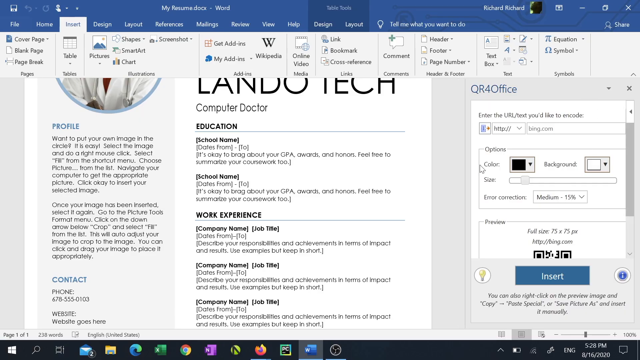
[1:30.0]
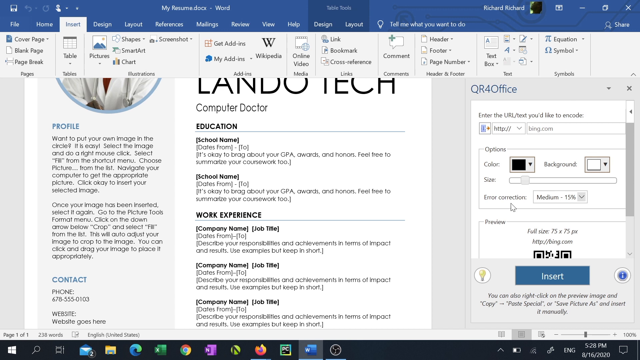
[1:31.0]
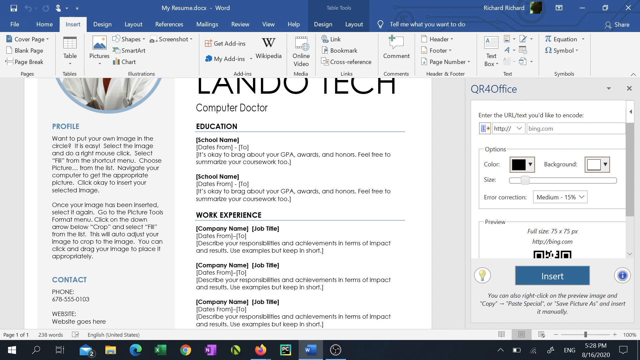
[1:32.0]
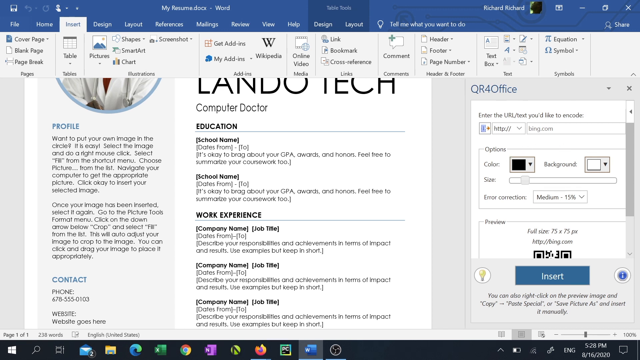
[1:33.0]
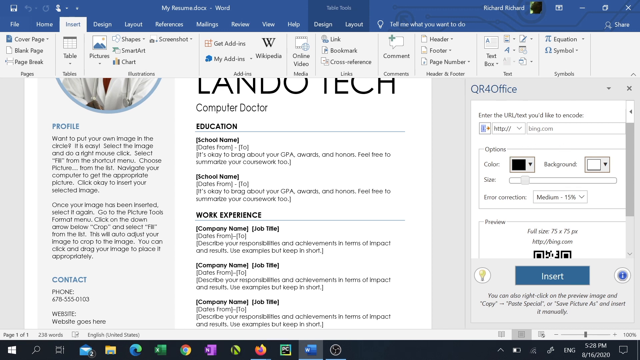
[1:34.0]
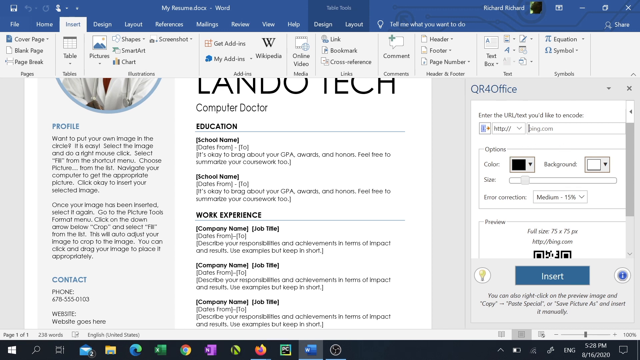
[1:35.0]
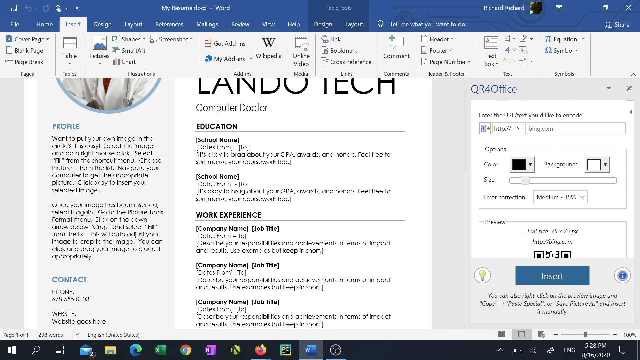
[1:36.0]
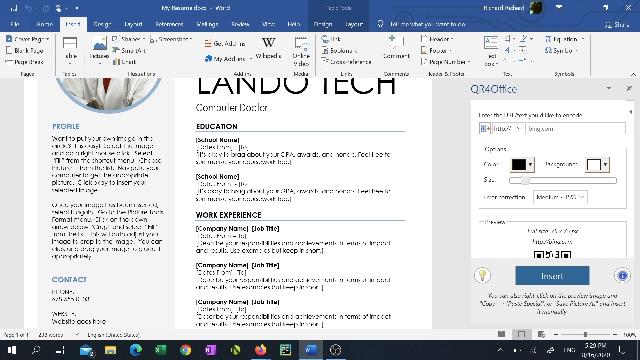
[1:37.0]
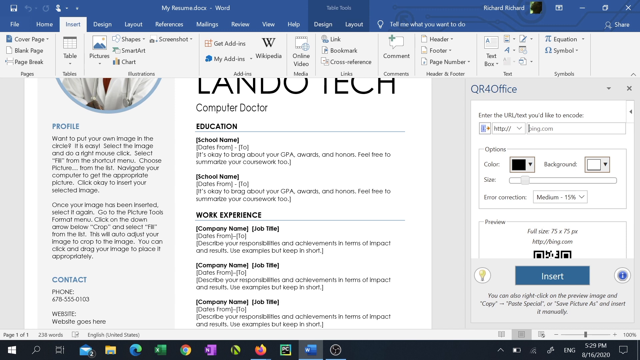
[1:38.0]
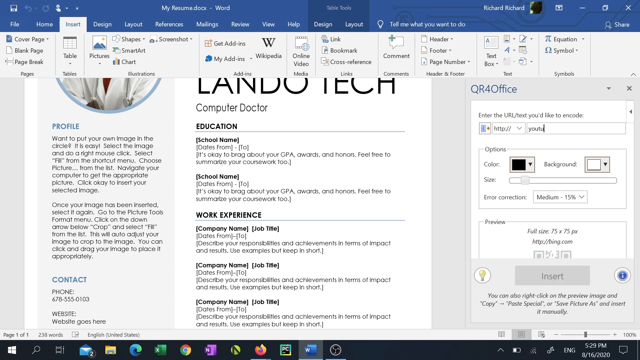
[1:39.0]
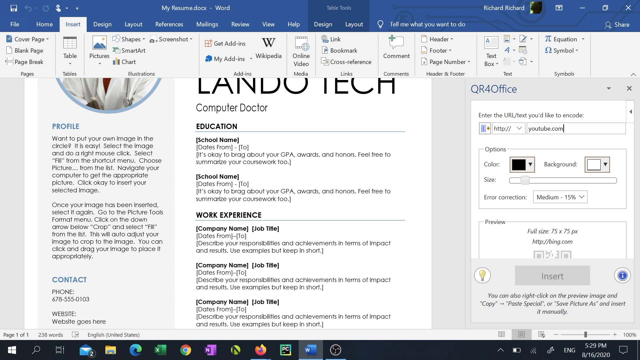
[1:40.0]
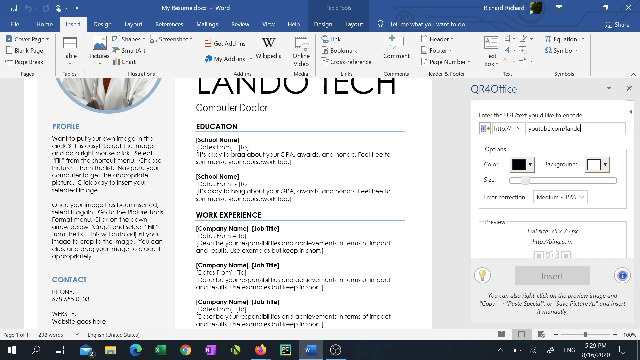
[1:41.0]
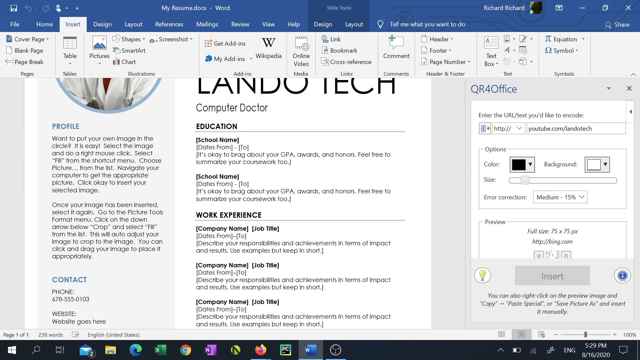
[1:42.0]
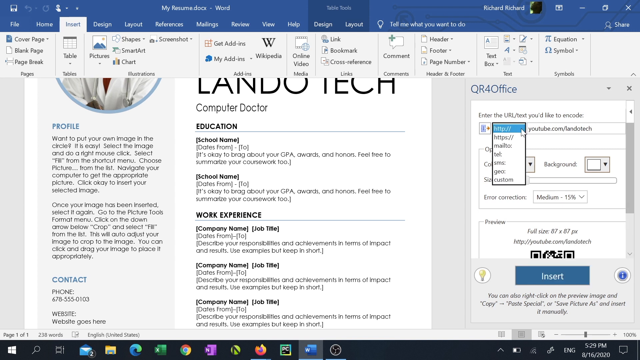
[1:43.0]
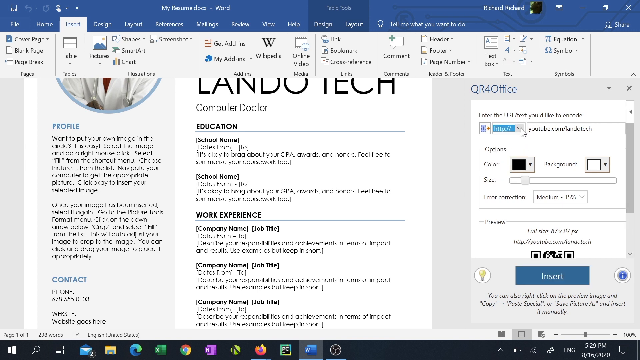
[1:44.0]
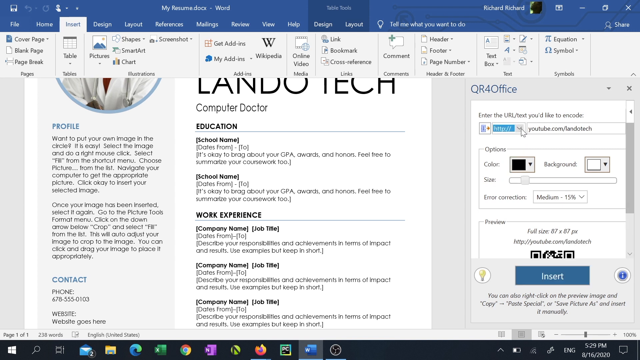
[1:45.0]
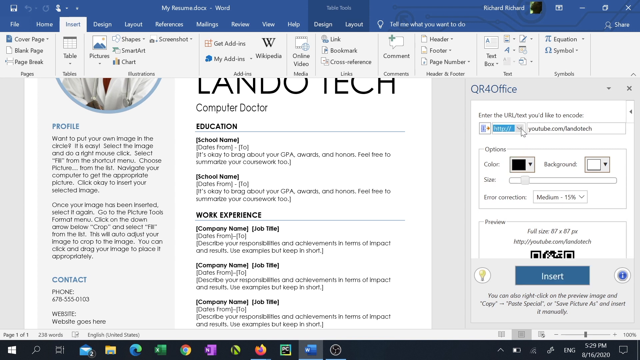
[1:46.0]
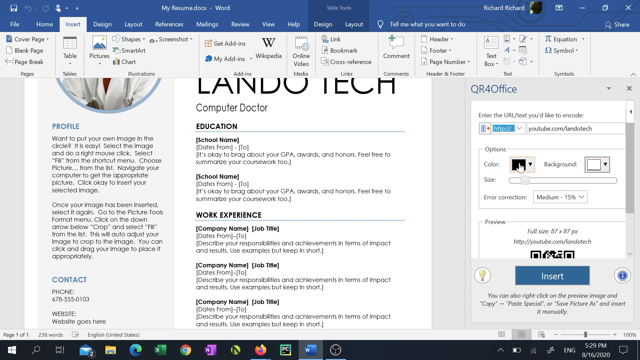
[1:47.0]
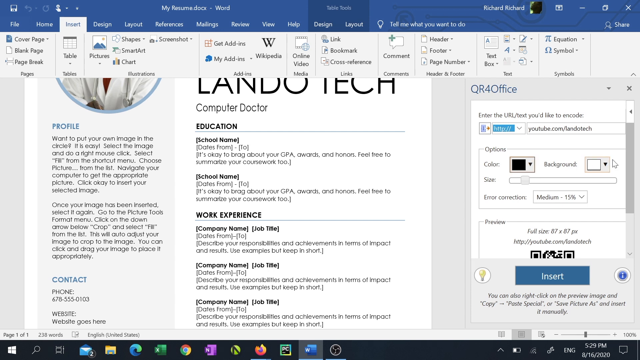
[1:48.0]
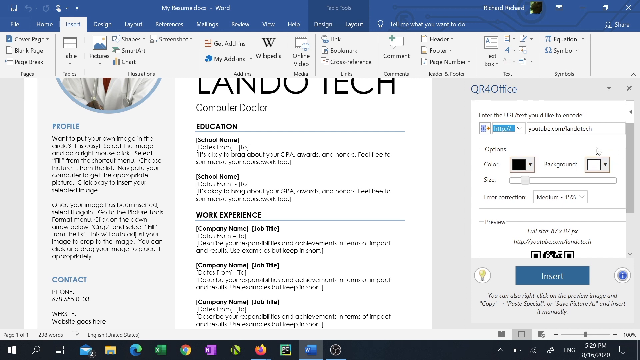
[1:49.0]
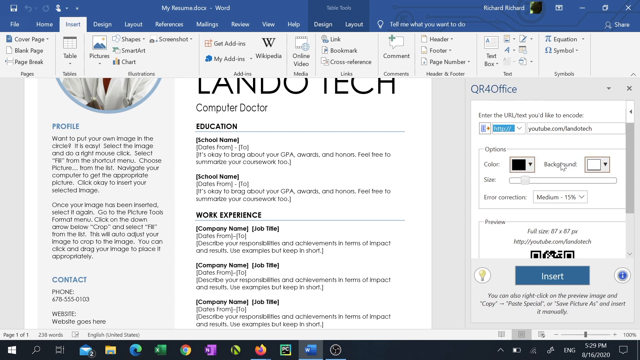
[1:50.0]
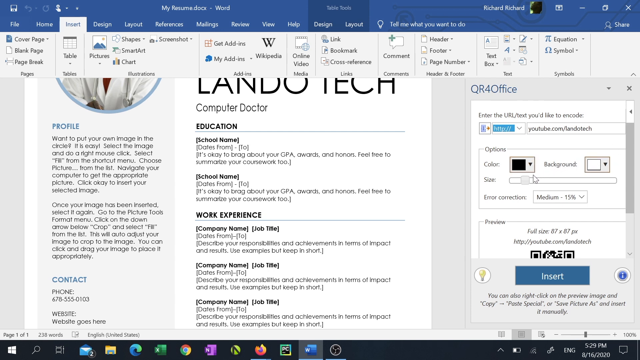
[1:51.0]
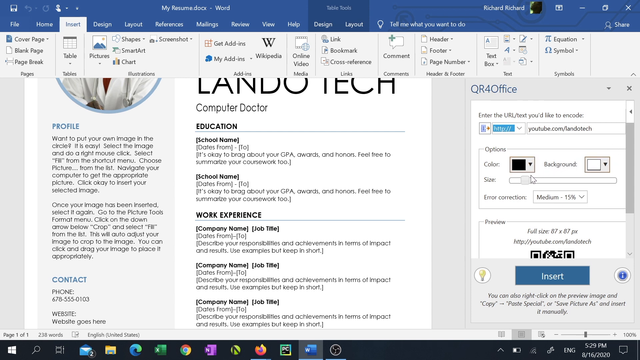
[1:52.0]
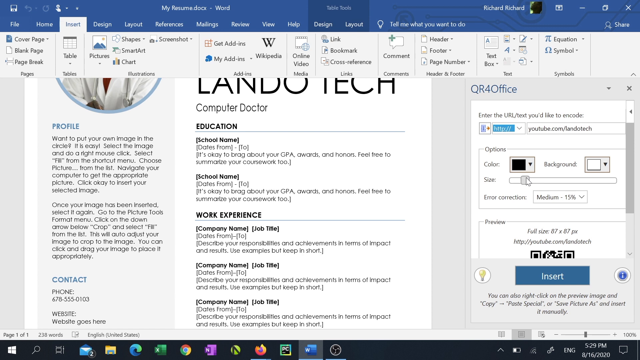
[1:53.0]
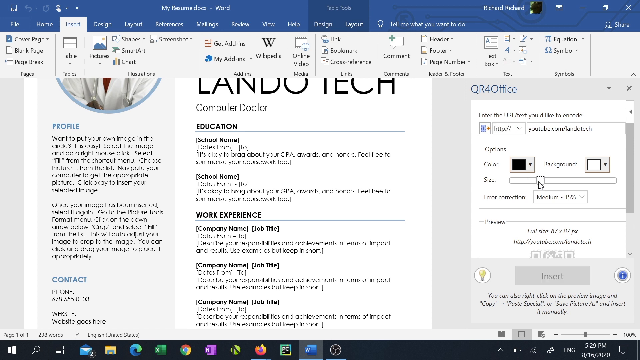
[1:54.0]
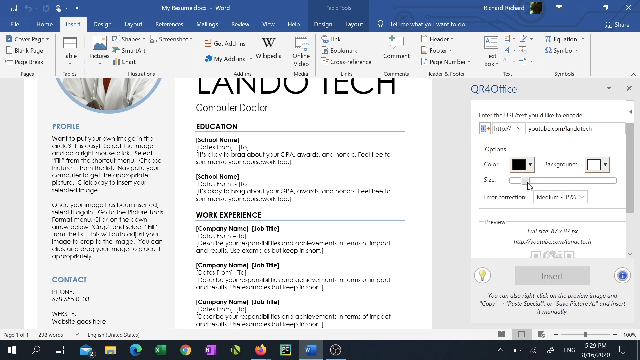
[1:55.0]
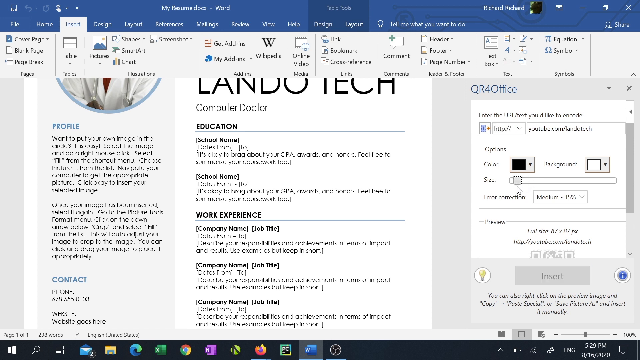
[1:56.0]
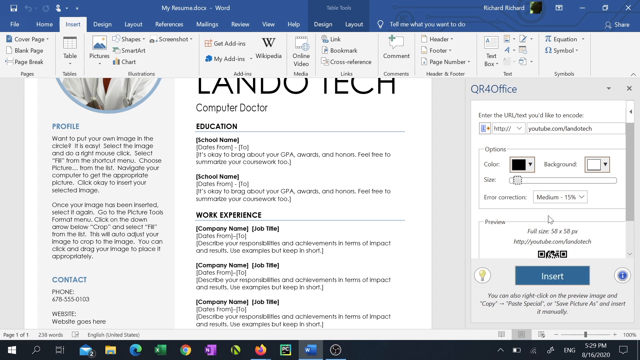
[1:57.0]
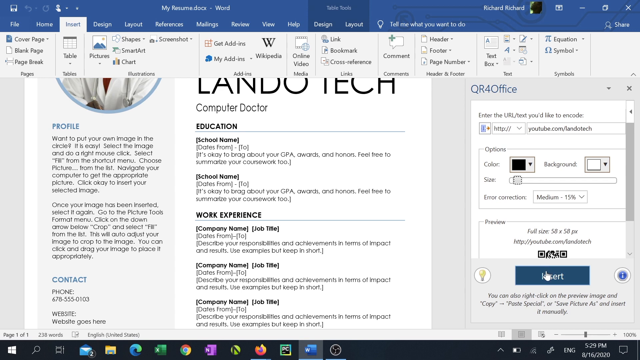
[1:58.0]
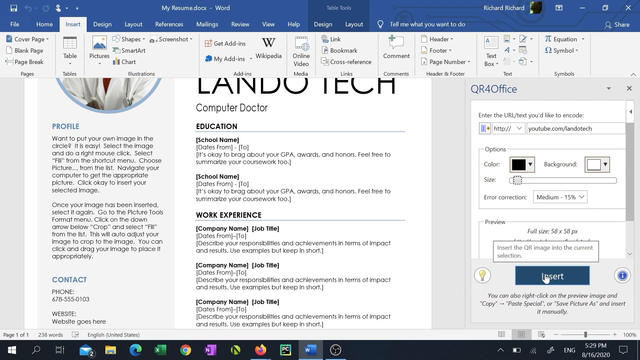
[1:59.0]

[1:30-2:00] Microsoft Word is open with a pamphlet template that a person is working on. On the left side is a black man in a doctor's coat with a stethoscope around his neck, with his profile and contact information underneath. To the right of the picture it says "Lando Tech Computer Doctor", with categories underneath: "education", "school name", "work experience", "company name", "job title". On the right side of the screen it says "QR office" and "enter the URL, text you'd like to encode", with "insert" at the bottom. Many menus and categories are at the very top. The mouse cursor makes circles around the area that says "QR for office", moves around some more, and clicks inside the field for the URL to encode, where "youtube.com/Lando Tech" is typed. It then clicks a down arrow labeled "HTTP", moves down to the options section, goes to background, which shows the white background, and hovers over the text to encode. It then moves to "size", where a bar with a little square can be pulled and pushed to make the size bigger or smaller, and the size is made a little smaller. Finally the cursor moves down to the rectangle labeled "insert" and clicks it, and a screen appears.